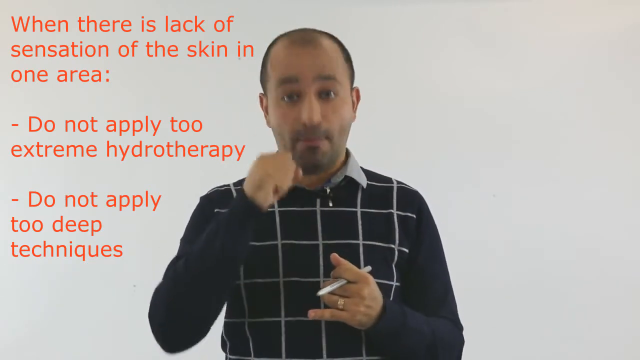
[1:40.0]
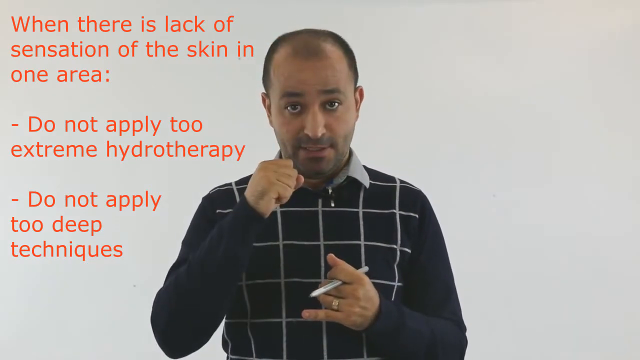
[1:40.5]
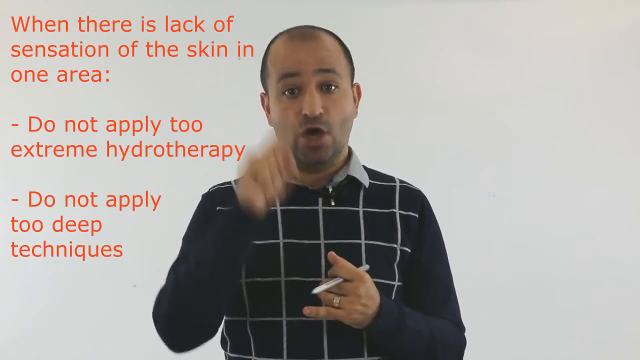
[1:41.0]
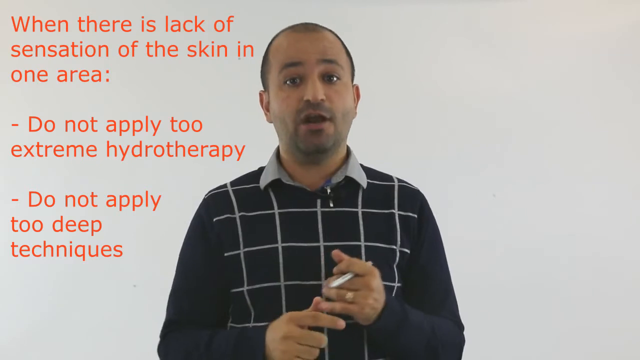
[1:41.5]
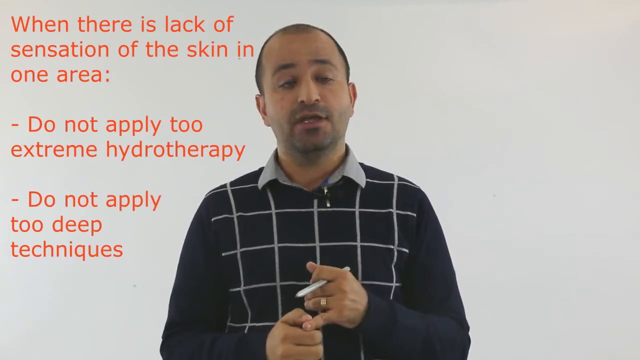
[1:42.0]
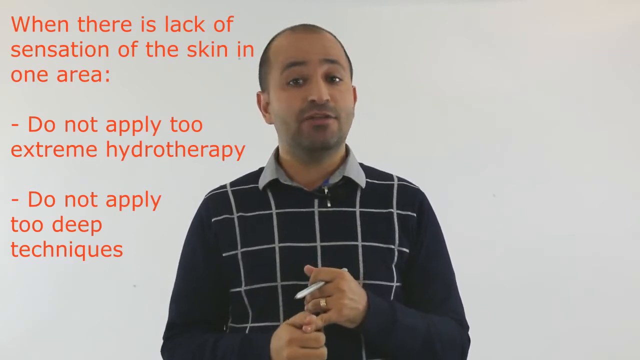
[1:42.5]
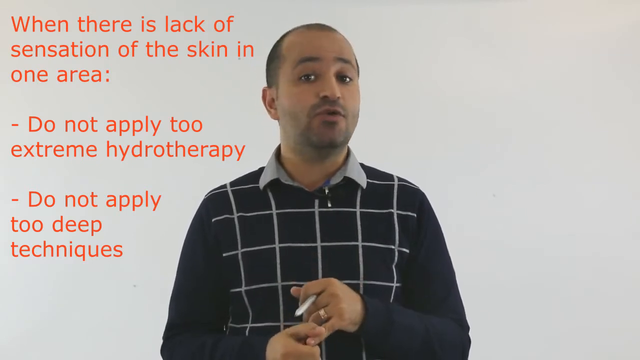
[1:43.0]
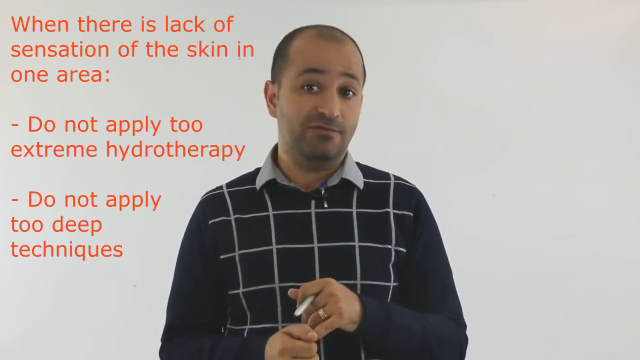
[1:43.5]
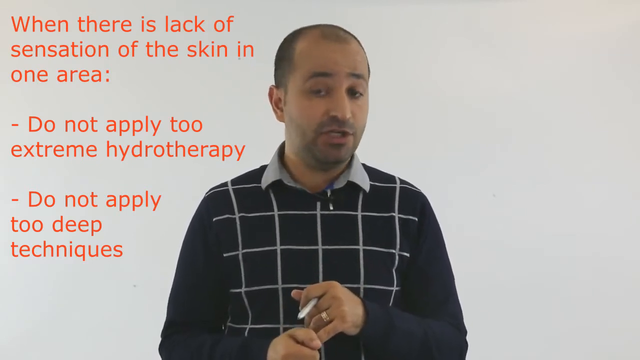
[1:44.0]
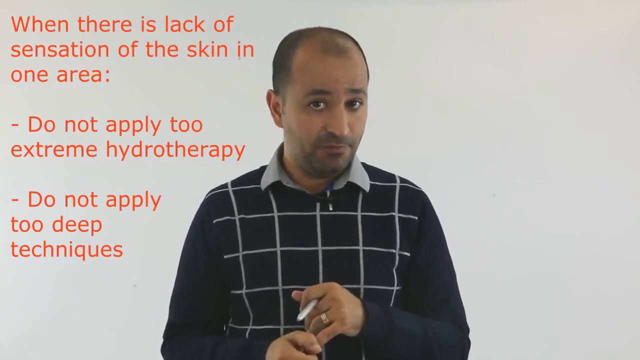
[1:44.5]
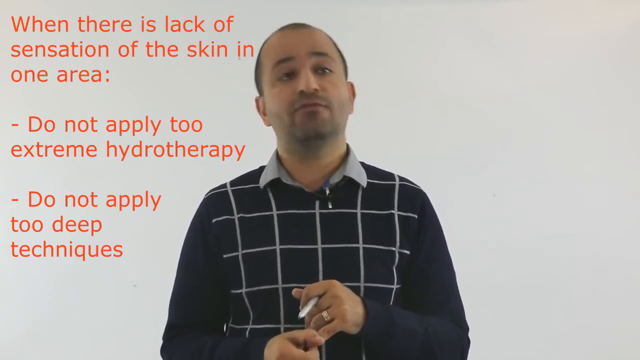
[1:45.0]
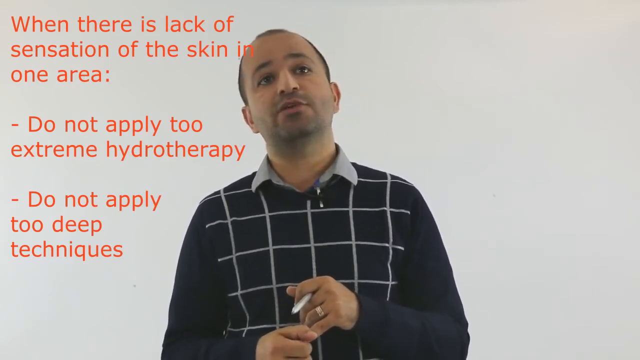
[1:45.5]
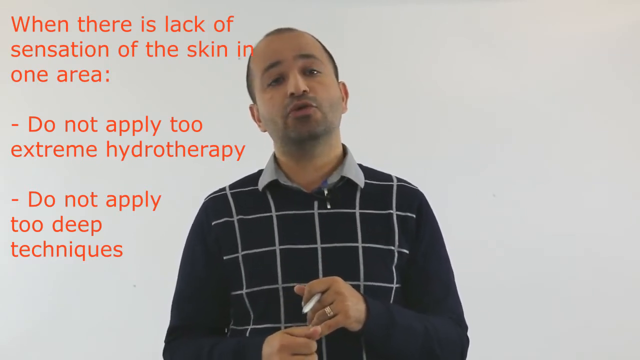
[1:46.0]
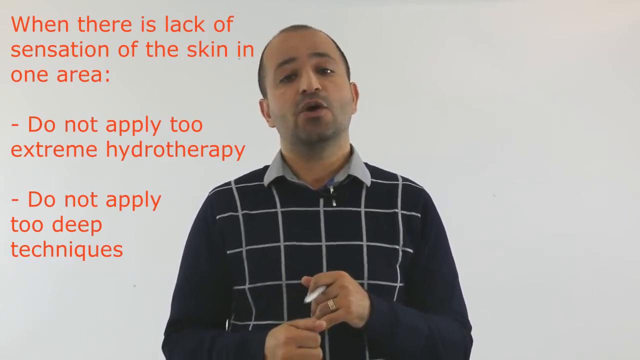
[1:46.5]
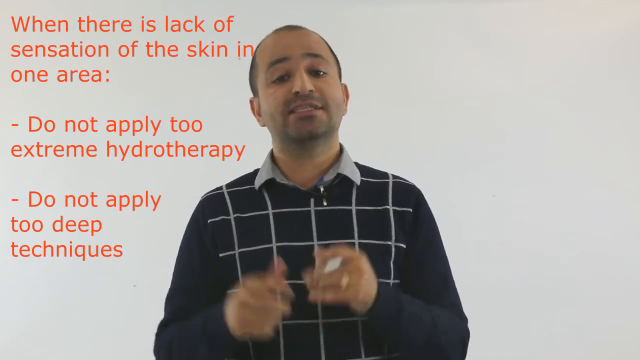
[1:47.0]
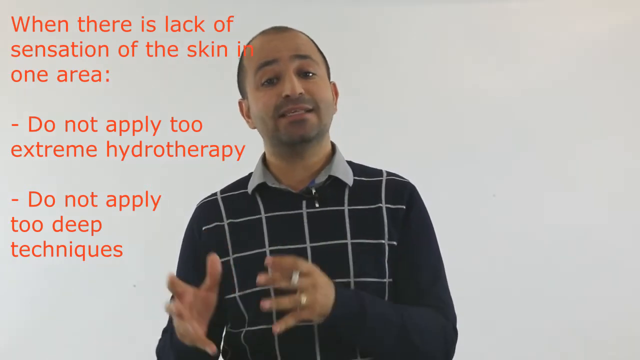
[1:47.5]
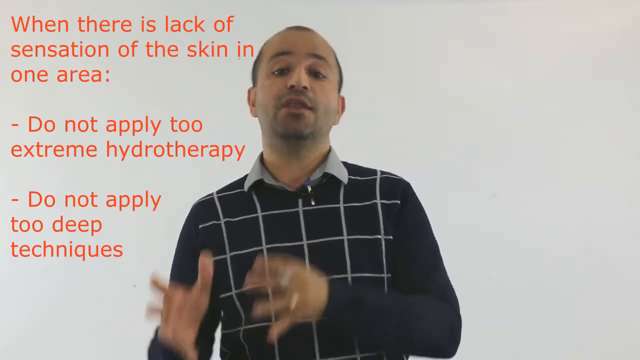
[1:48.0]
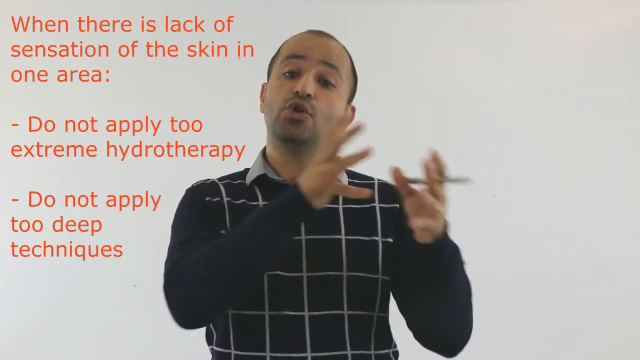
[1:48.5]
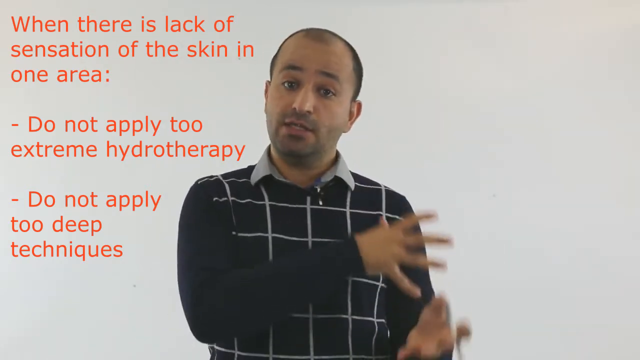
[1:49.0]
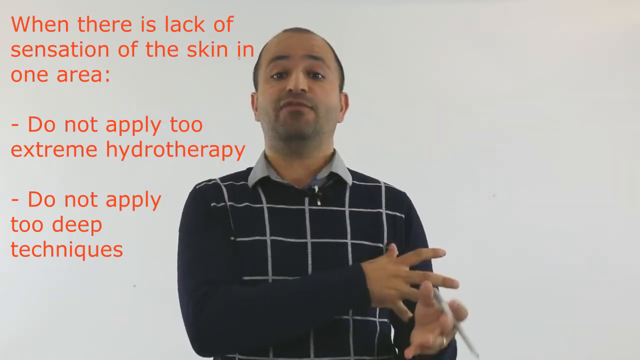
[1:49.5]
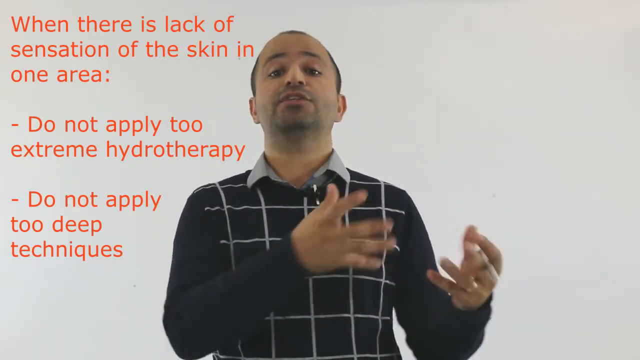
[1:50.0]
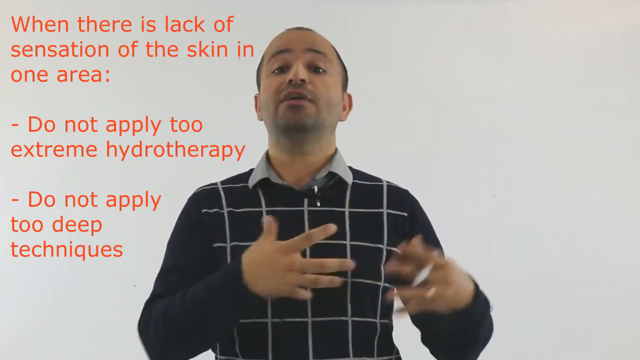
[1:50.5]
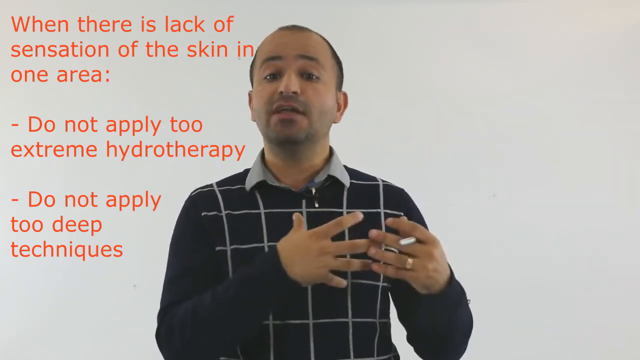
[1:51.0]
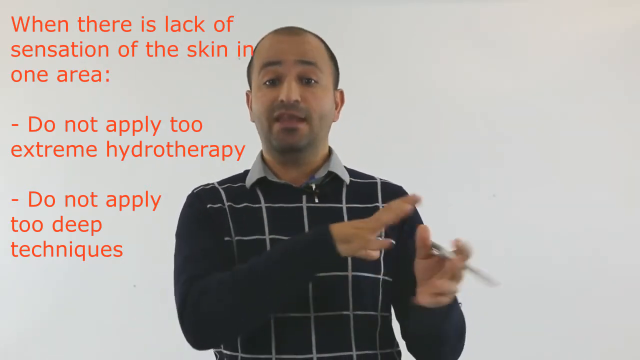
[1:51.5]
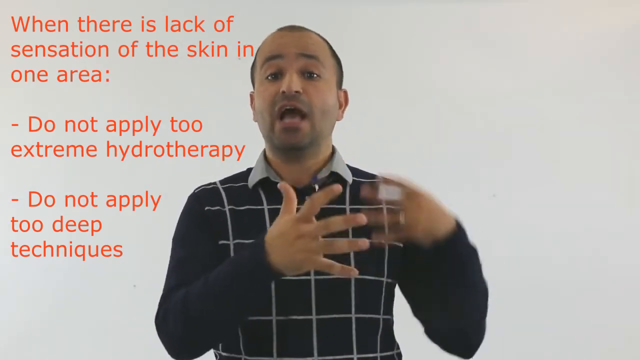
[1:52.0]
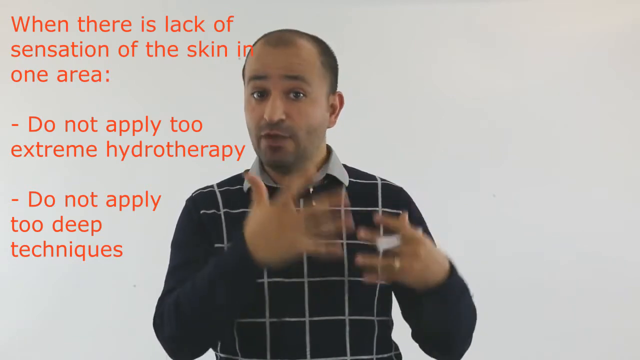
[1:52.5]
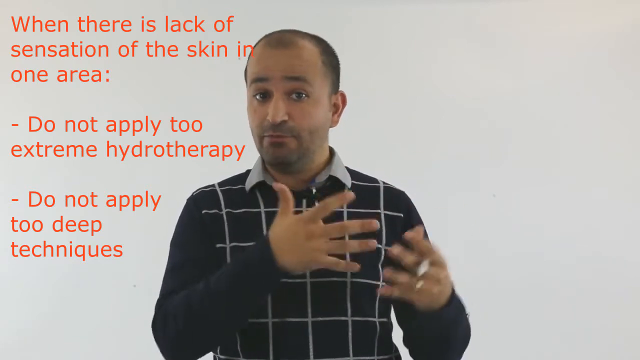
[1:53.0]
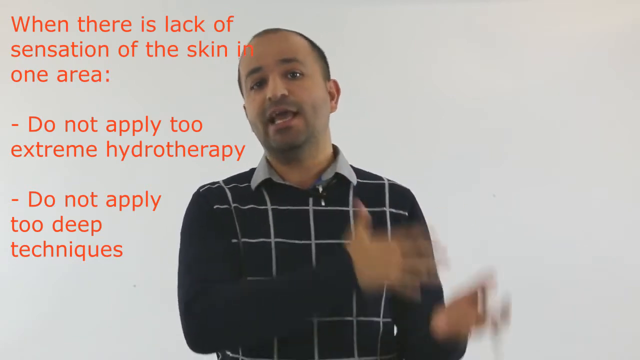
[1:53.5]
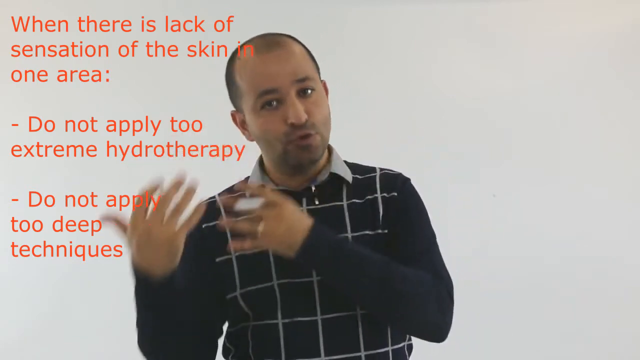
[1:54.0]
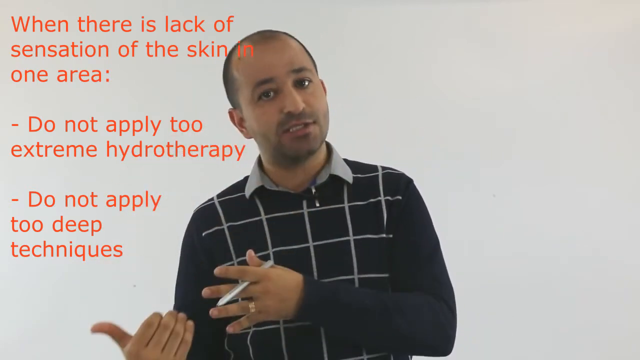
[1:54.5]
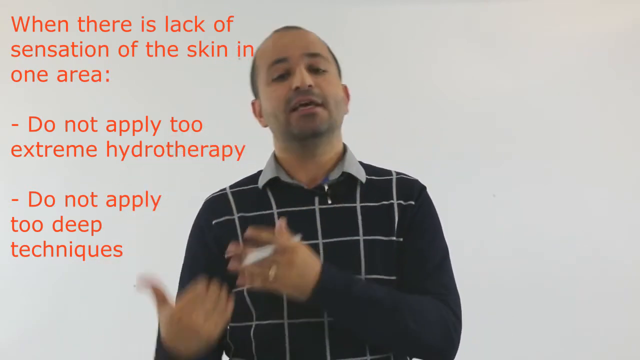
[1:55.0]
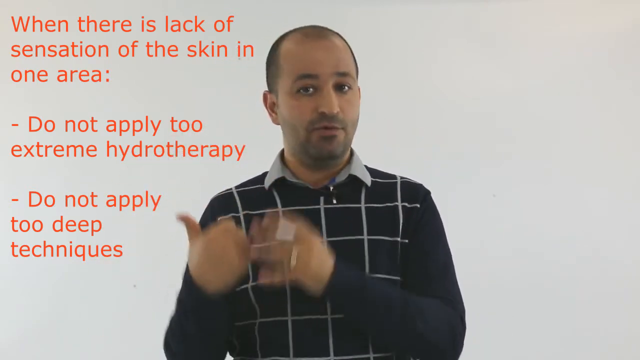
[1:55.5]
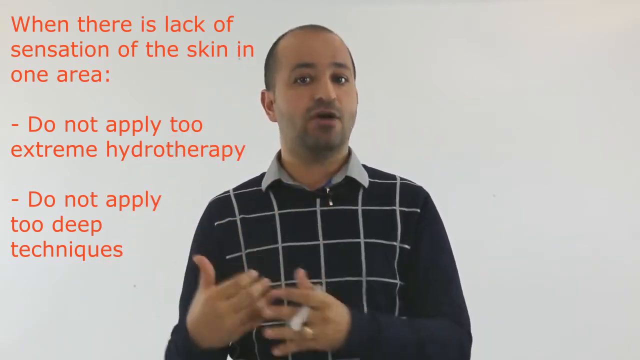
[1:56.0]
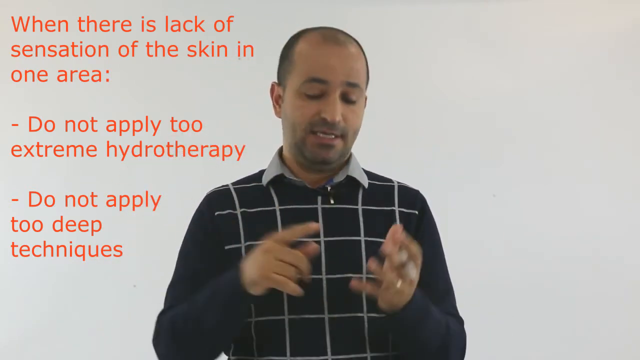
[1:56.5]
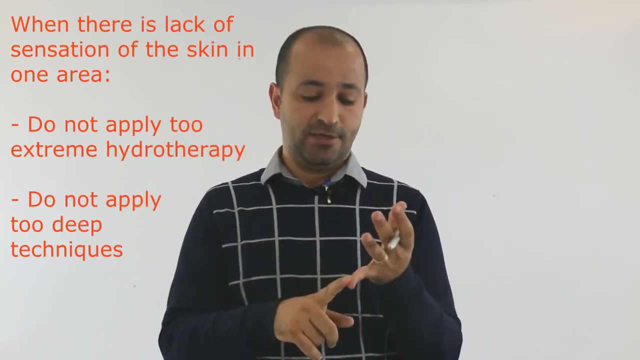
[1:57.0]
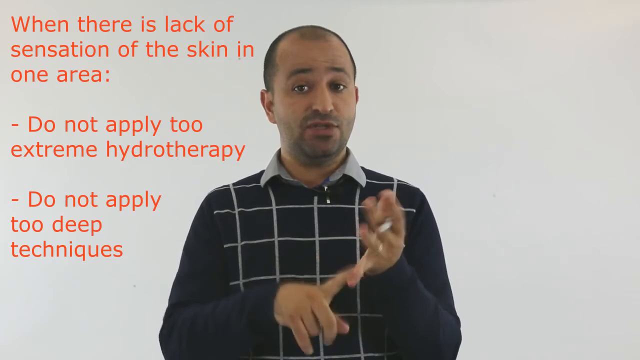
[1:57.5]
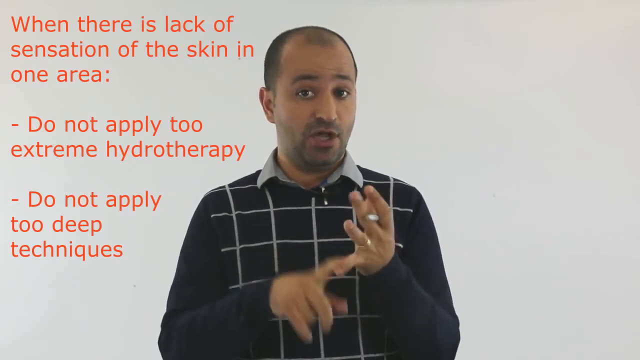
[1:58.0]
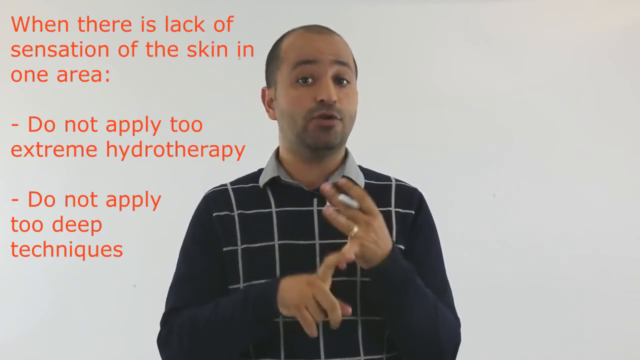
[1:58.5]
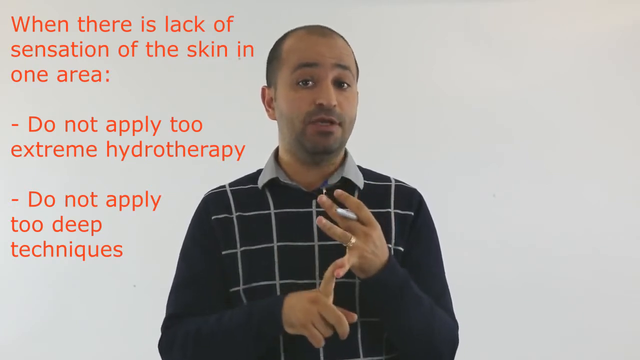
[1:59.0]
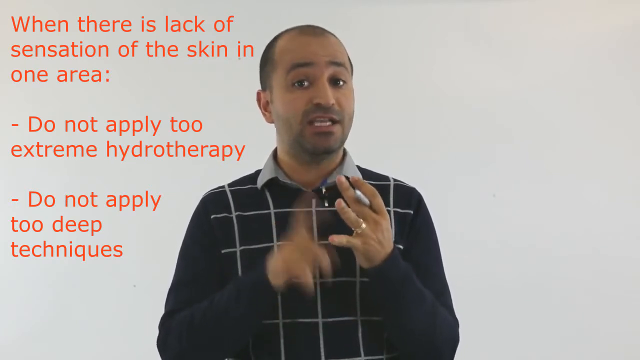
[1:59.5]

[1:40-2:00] The Middle Eastern man stares directly at the camera in front of a white background. He wears a black sweater over a gray button-up shirt, has a wedding ring on his left hand, and holds a pen in his left hand. Red text on the left-hand side of the screen reads "when there is a lack of sensation in one area, do not apply too extreme hydrotherapy. Do not apply too deep techniques," referencing the earlier exam question. He talks a lot, gesturing with his hands, very animated in his conversational style, and appears to be discussing the earlier exam question.